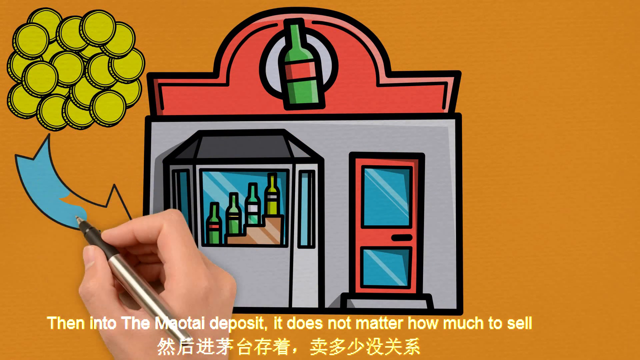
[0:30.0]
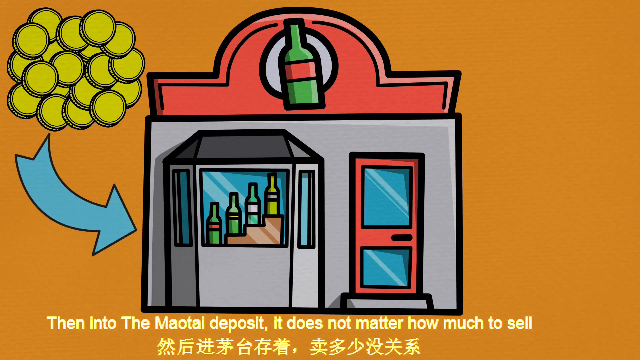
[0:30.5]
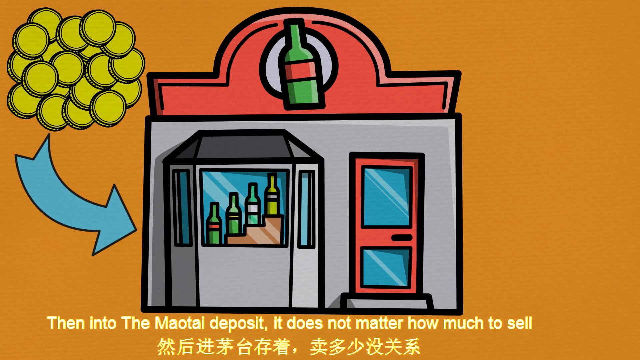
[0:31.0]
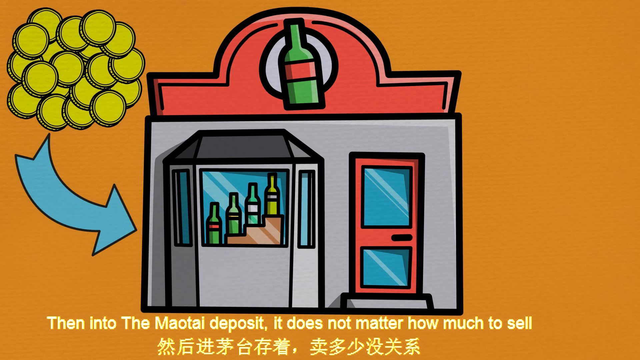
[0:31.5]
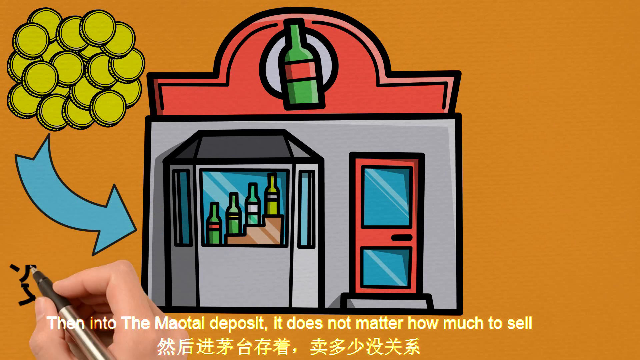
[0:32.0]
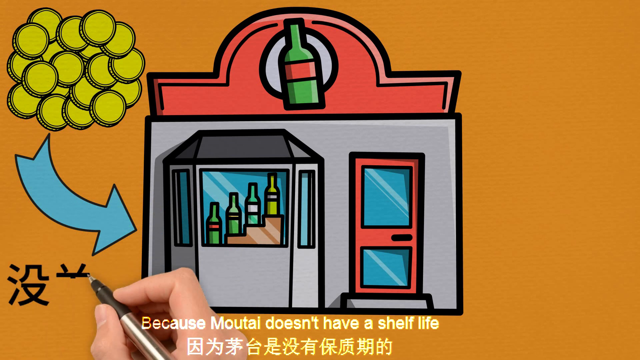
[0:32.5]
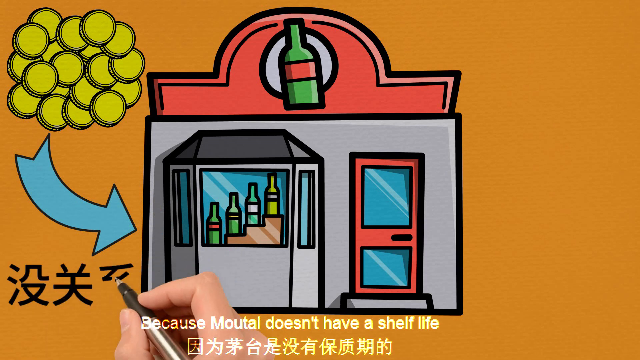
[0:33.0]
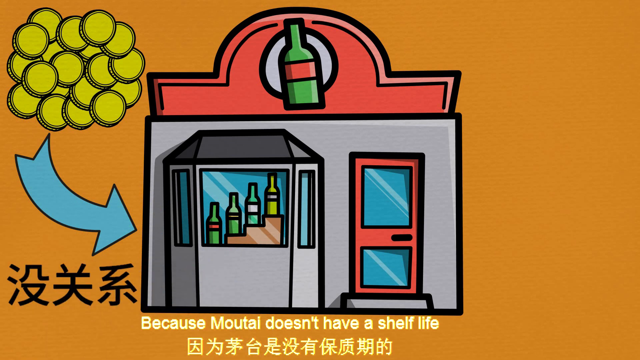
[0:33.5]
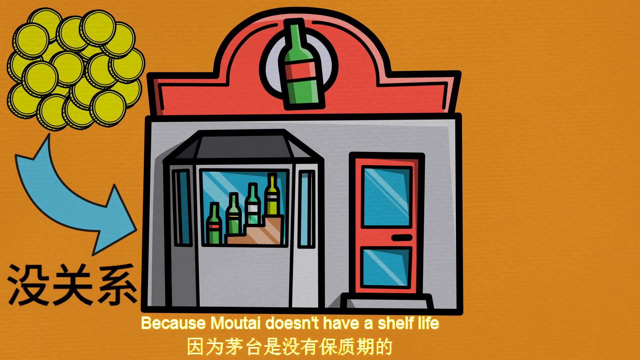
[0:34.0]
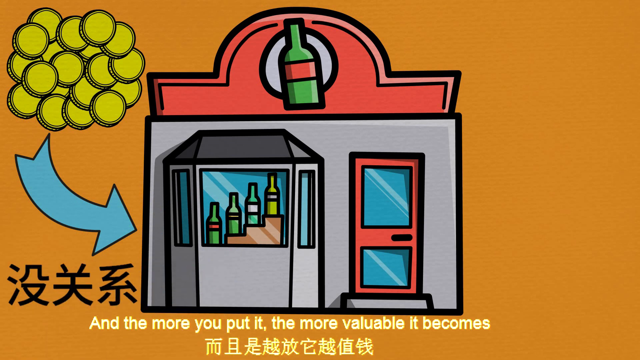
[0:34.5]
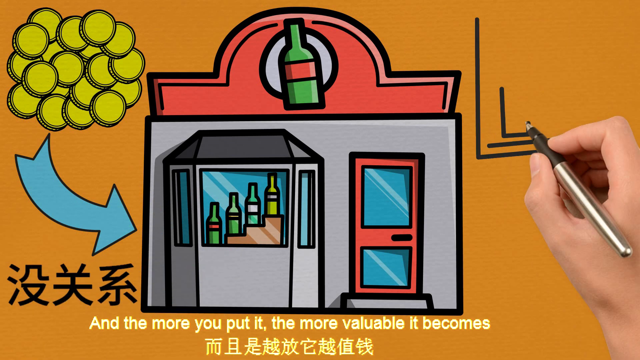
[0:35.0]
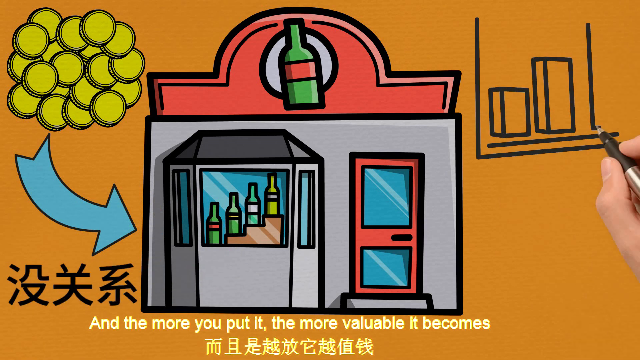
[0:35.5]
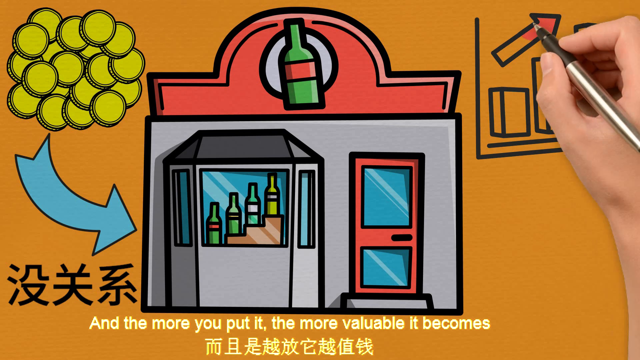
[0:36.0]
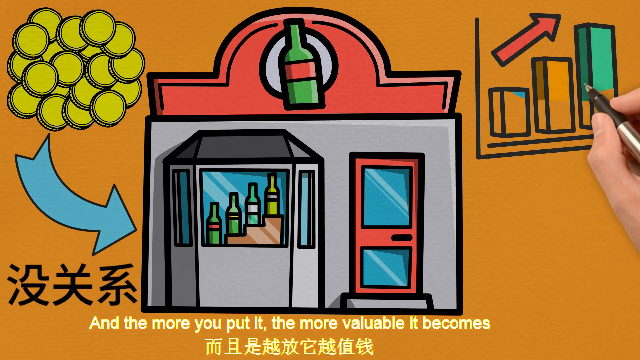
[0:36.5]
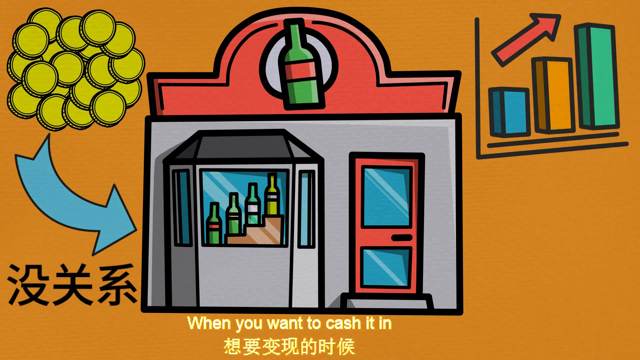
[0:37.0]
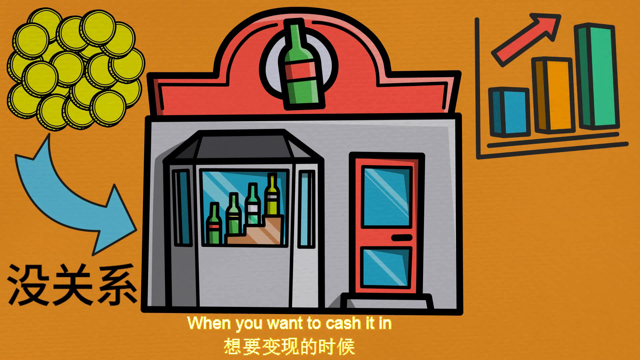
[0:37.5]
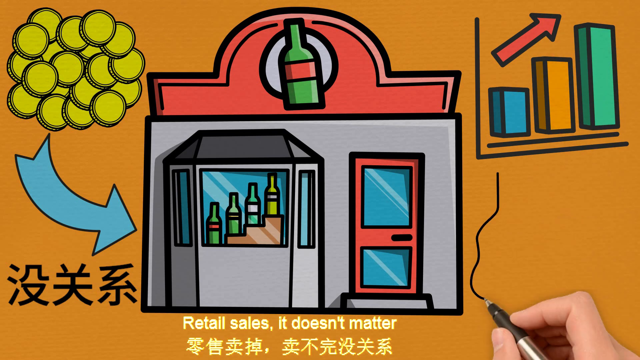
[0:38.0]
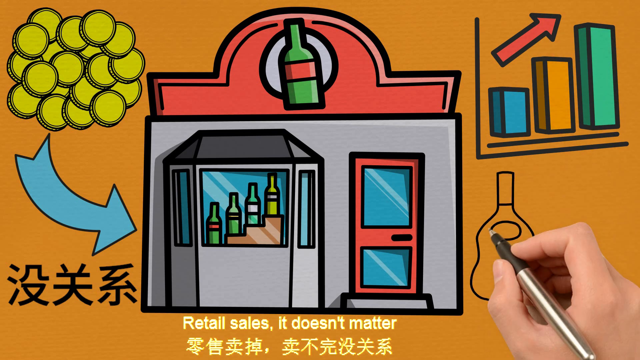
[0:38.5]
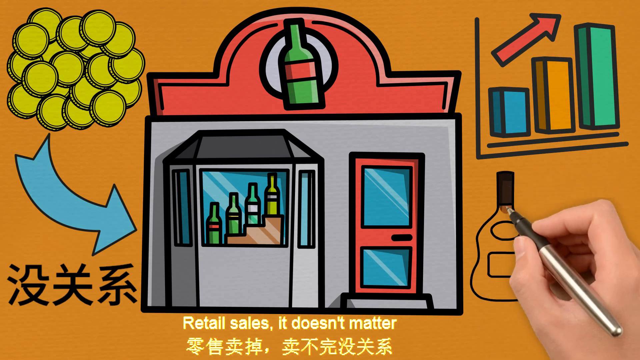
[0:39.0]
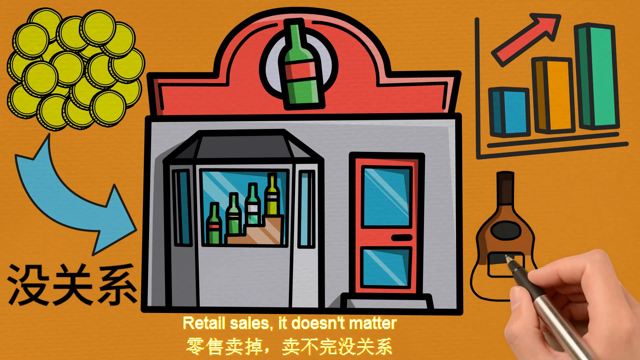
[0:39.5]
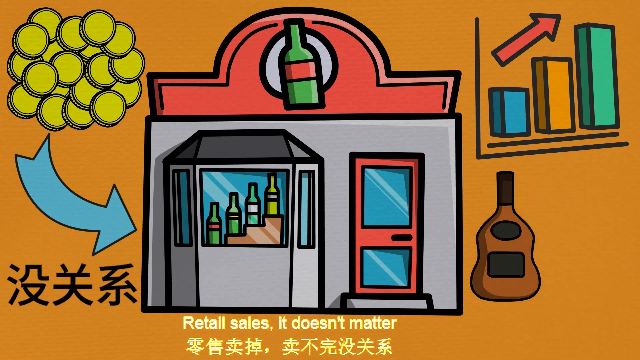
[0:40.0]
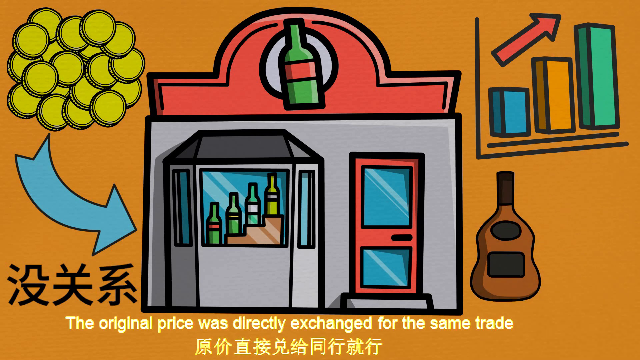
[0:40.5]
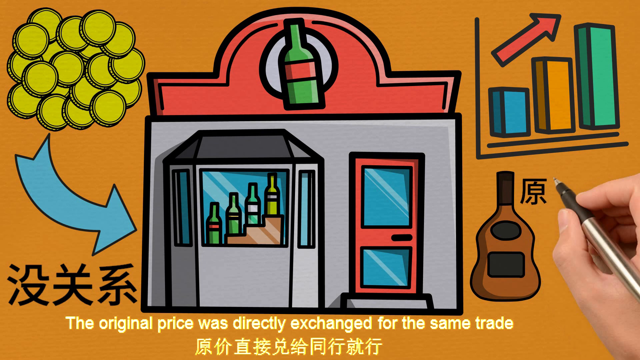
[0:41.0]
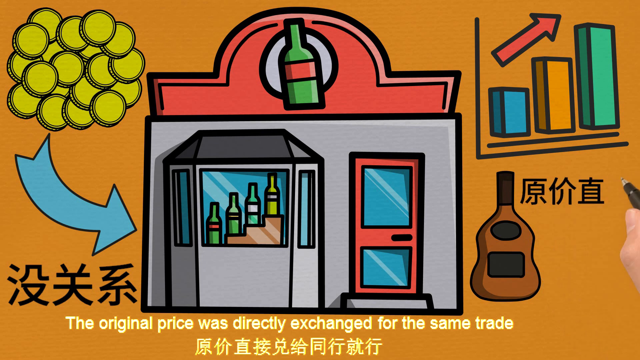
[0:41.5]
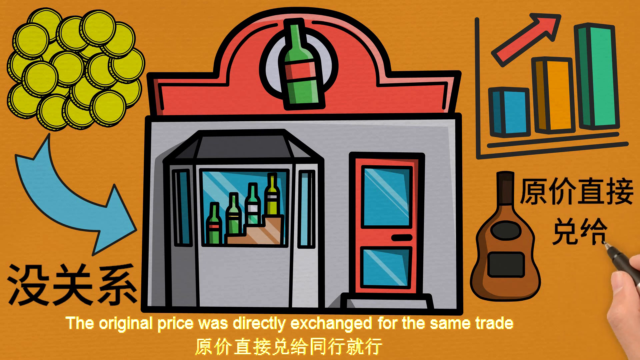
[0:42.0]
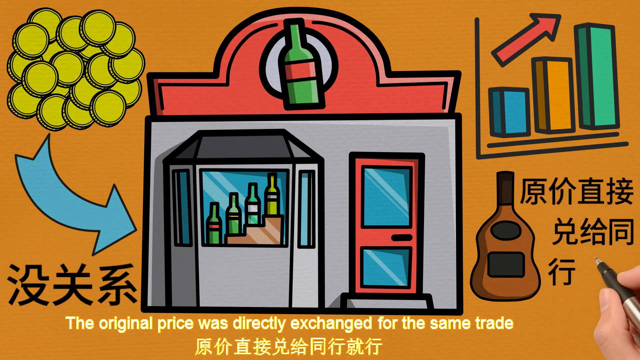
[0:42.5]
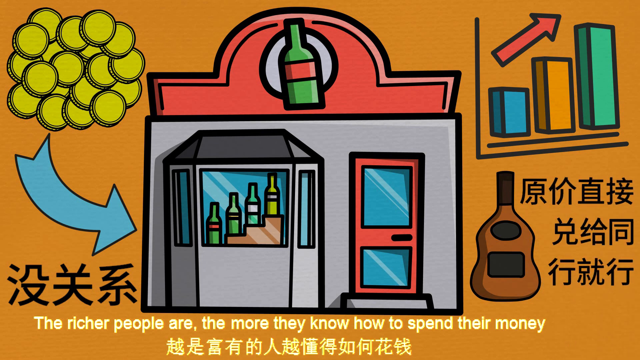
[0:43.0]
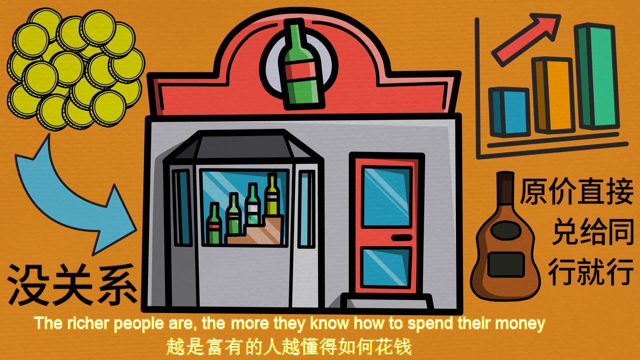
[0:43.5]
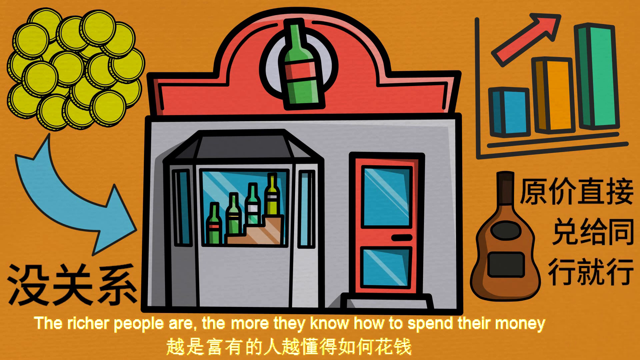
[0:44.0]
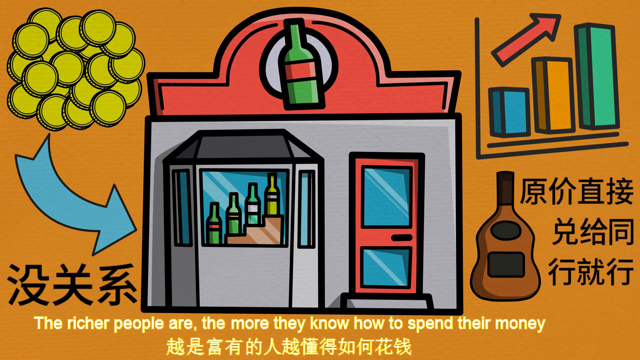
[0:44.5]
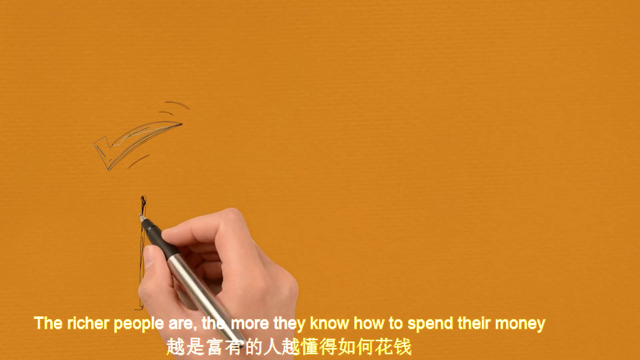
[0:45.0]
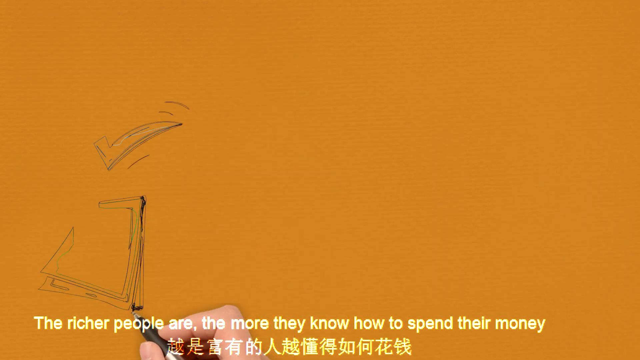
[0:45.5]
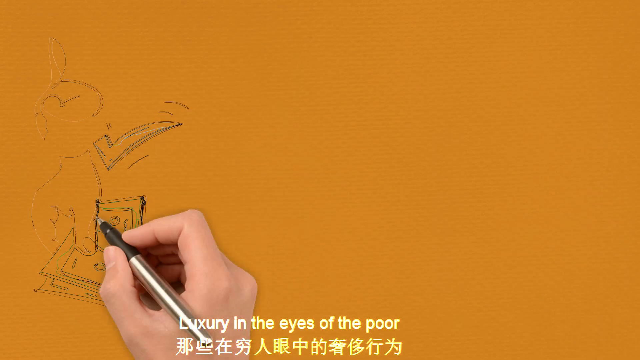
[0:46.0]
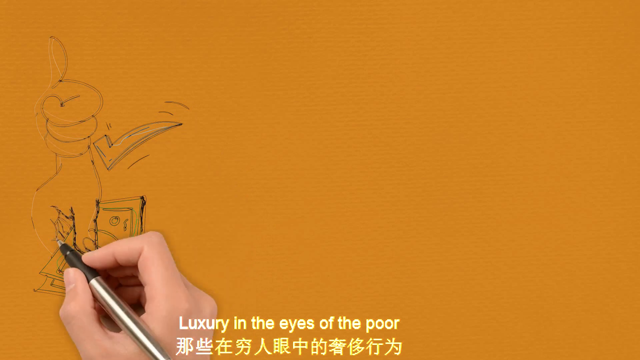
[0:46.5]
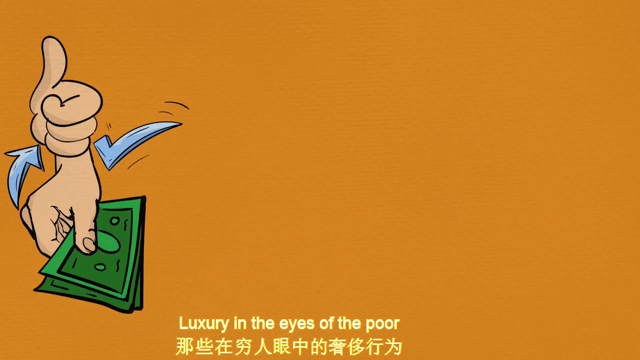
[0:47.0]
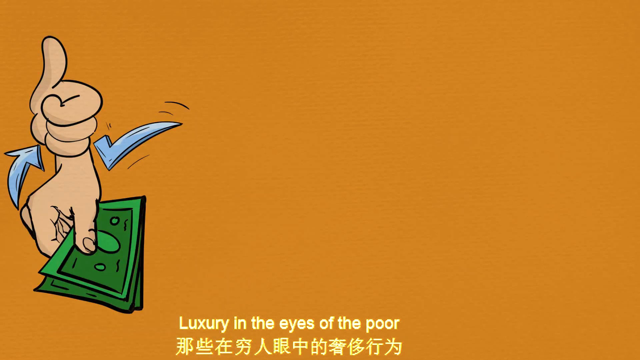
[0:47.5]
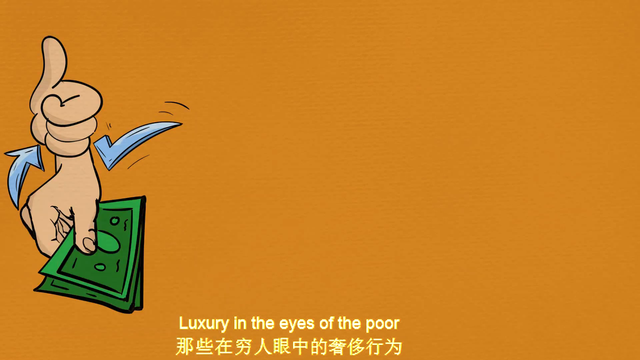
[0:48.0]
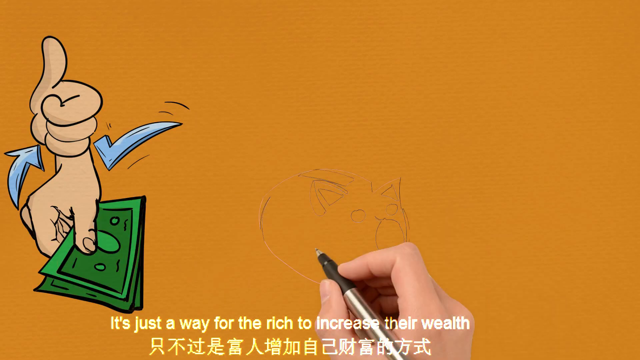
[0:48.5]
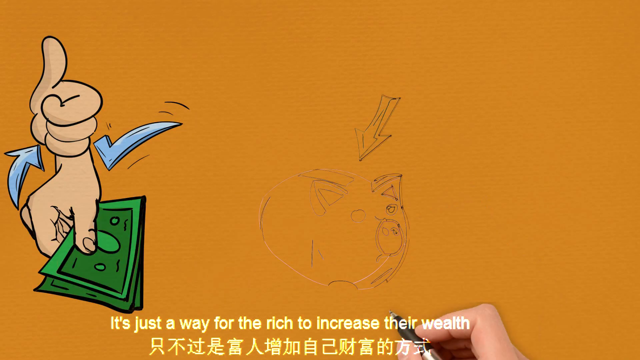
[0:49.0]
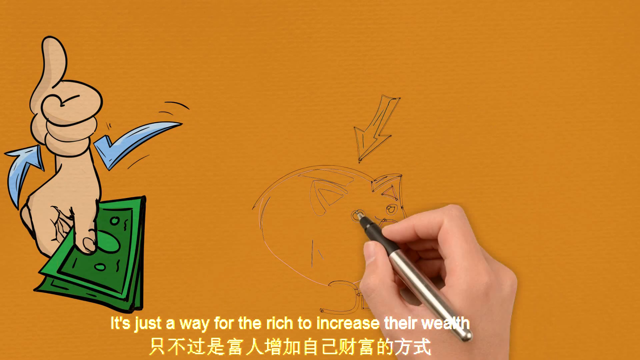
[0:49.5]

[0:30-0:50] A 2D drawing of a liquor store has gold coins in the upper left corner and an arrow pointing from the coins to the store. Text at the bottom reads "then into the Muay Thai deposit it does not matter how much to sell." A person draws some kind of graph with blocks on it, and the text reads "and the more you put it the more value it becomes," with Japanese writing underneath. The hand colors in some parts, then draws another bottle and colors it in, followed by more Japanese writing. The text at the bottom keeps changing as the person draws hands grabbing some money. The drawing happens very quickly, so everything moves fast, and the text changes along with what is drawn, though it may be that the text changes first and the drawing follows. The drawing moves from the Japanese symbols to the graph, an arrow pointing up and the bottle. The text reads "the original price was directly exchanged and richer people are the more they know how to spend their money." A hand holding money appears, followed by a piggy bank with an arrow pointing to it and coins going into it.